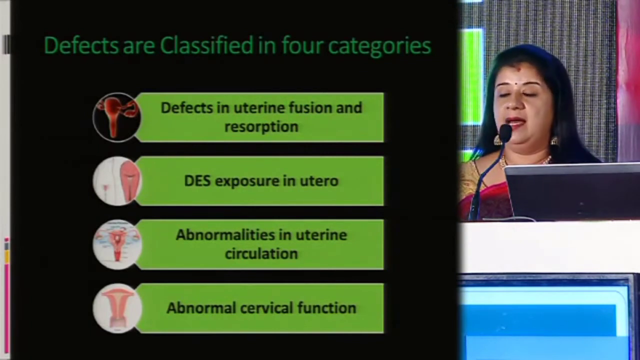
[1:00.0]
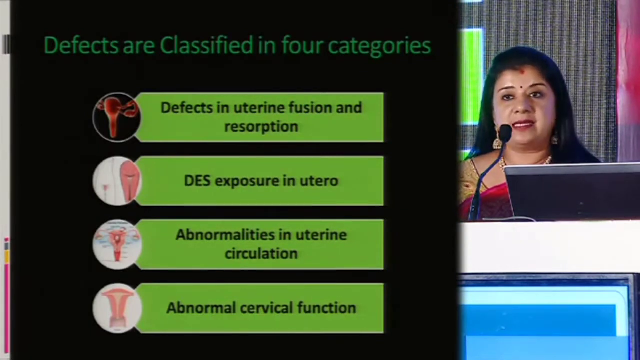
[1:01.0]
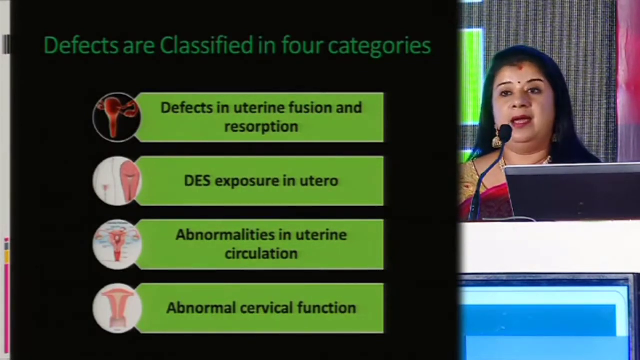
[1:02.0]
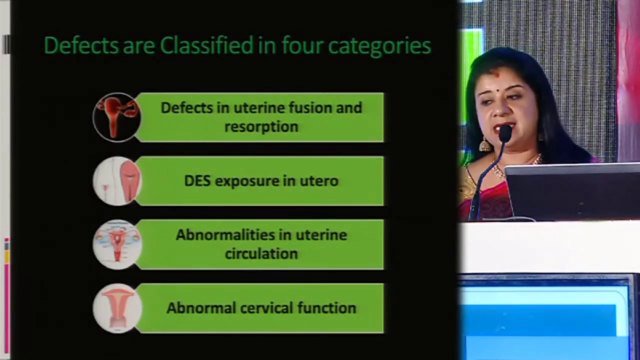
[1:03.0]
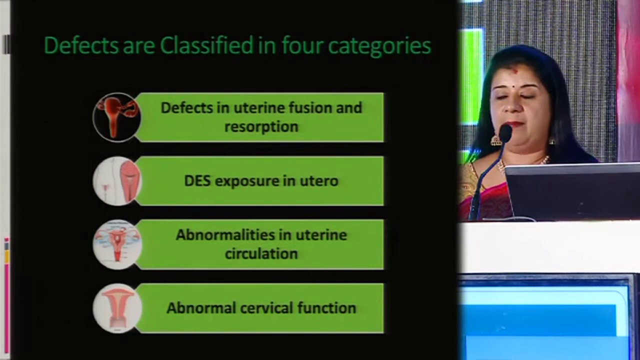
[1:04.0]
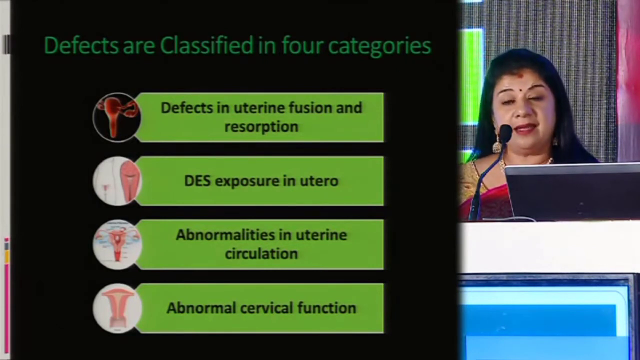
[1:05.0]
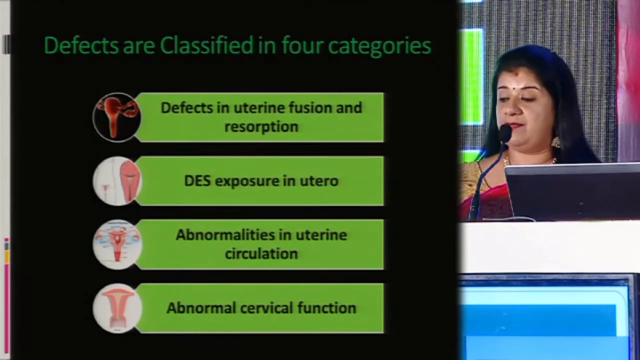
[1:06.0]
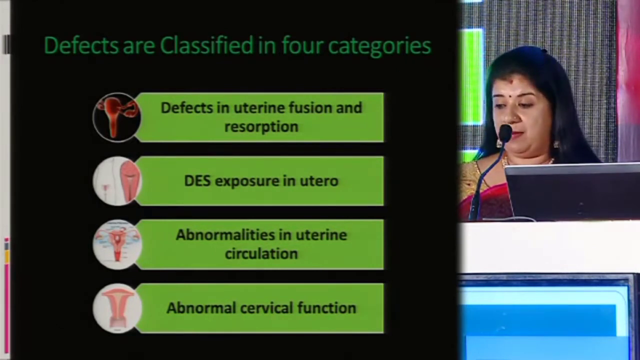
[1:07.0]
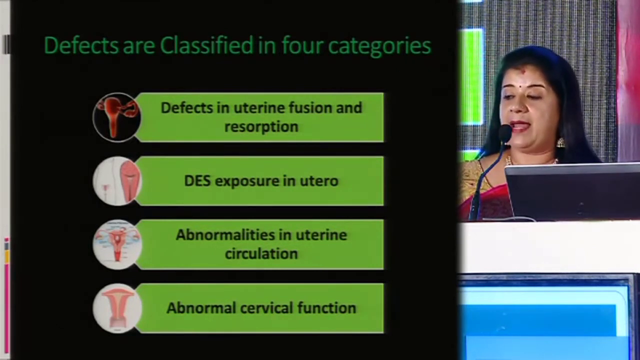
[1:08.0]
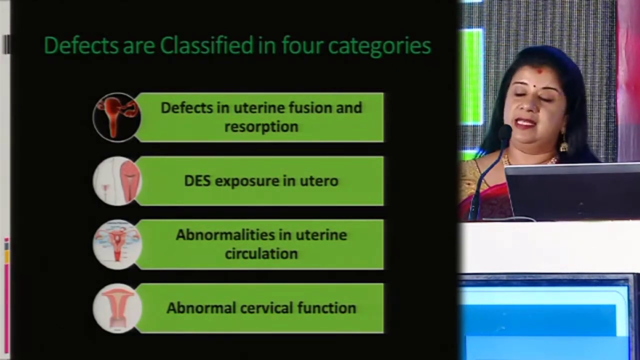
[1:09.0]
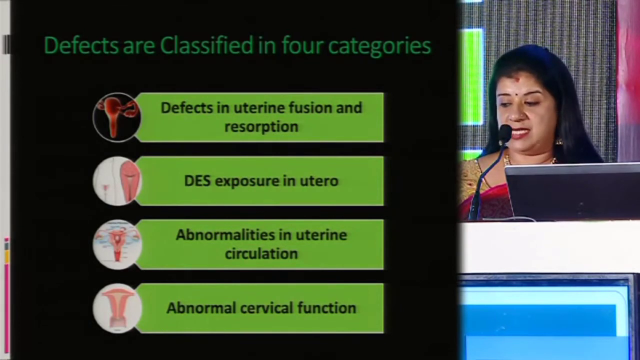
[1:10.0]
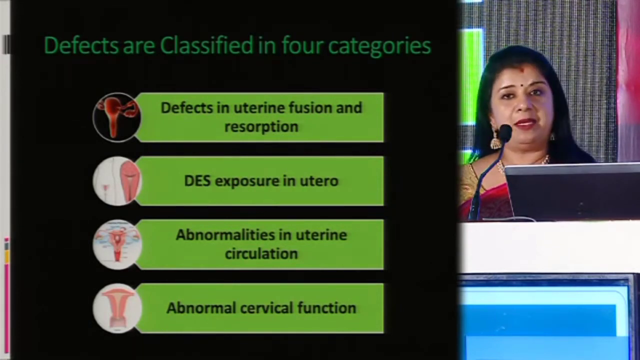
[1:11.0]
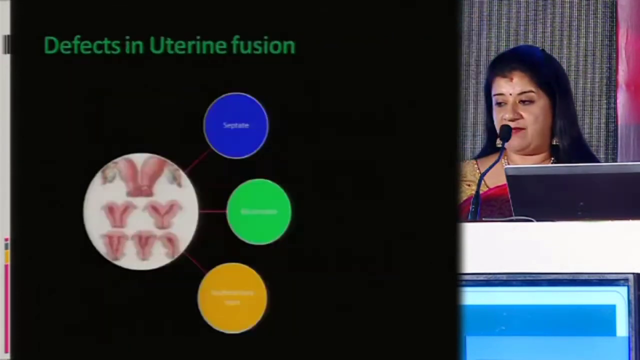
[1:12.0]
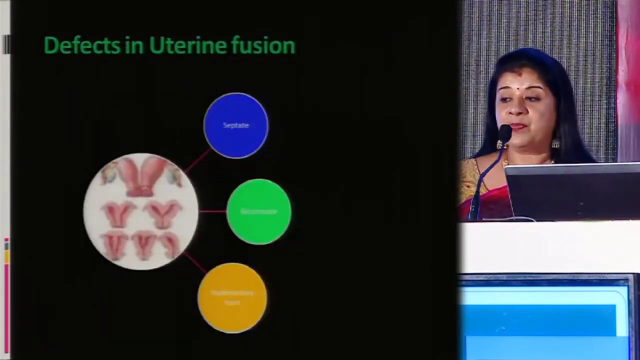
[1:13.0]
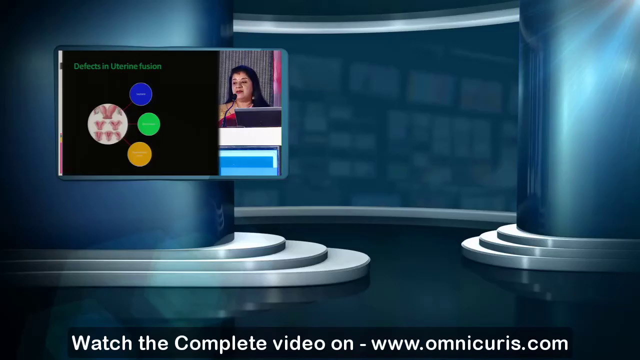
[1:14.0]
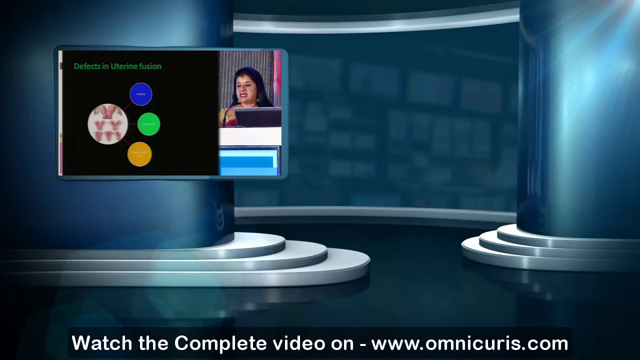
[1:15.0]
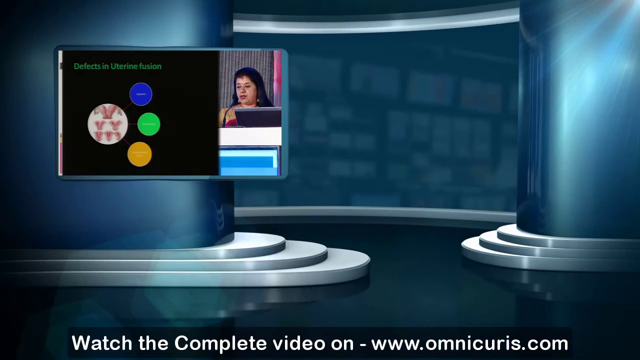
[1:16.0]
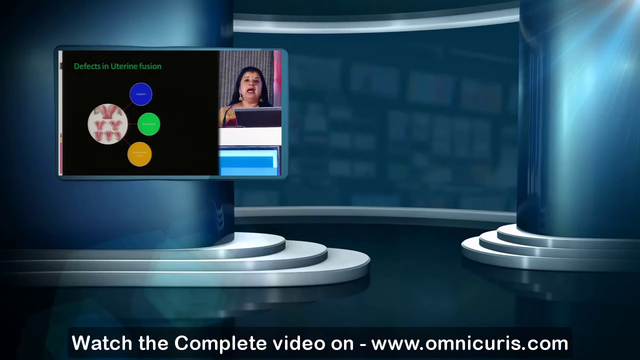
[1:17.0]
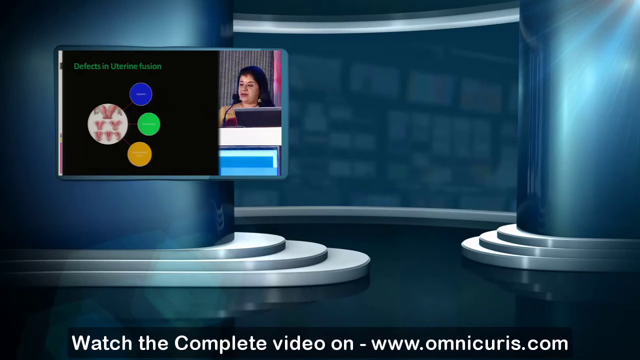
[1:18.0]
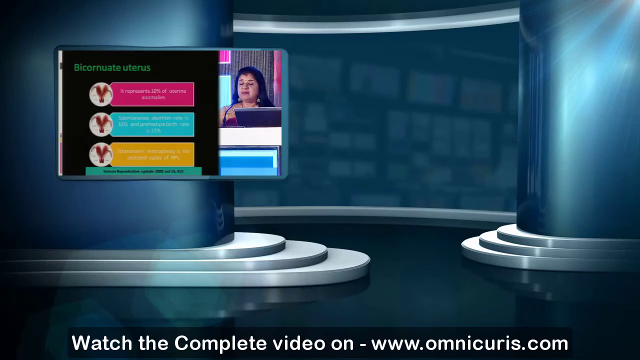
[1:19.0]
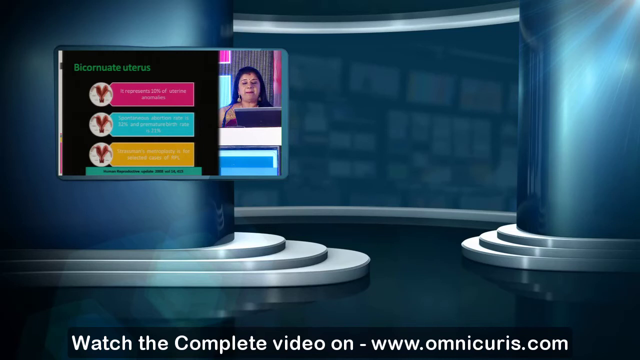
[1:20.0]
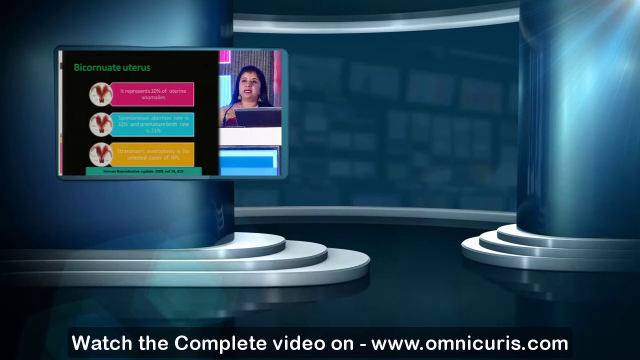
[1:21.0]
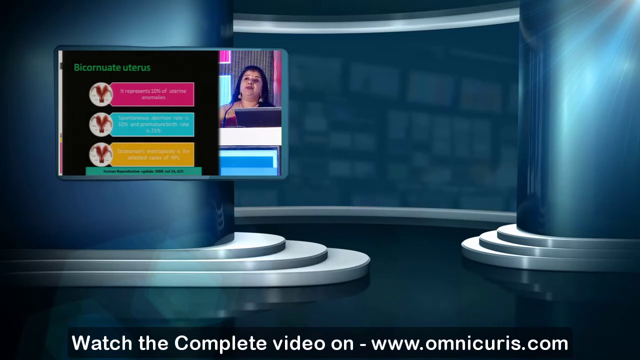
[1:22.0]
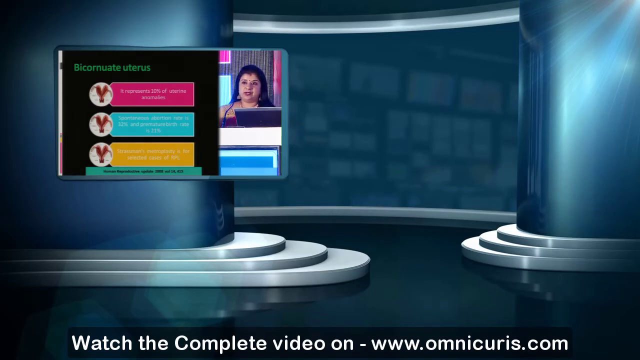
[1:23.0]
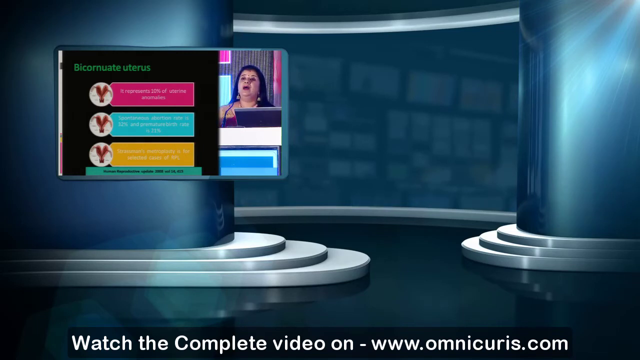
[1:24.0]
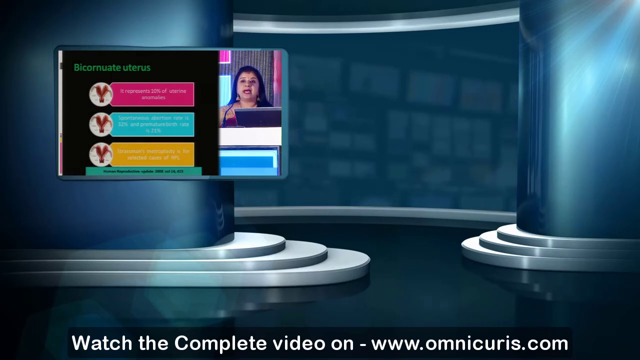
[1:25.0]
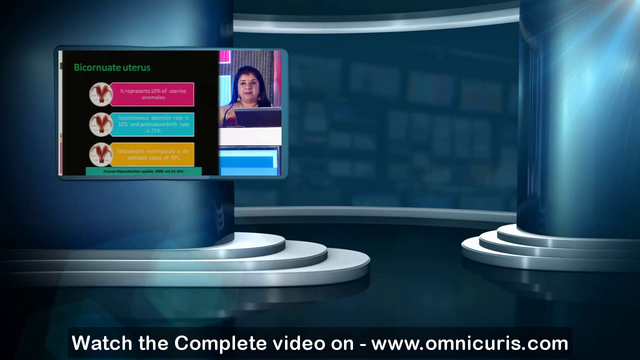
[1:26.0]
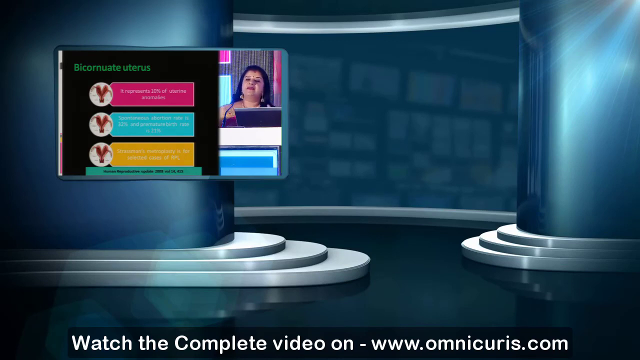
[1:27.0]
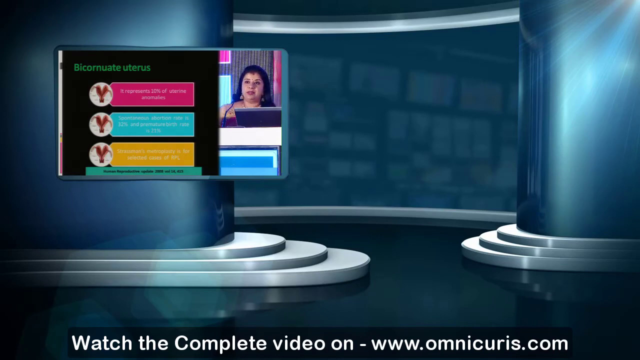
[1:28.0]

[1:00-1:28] A woman talks behind a microphone with a computer in front of her. To her left is a slide titled "defects are classified in four categories," with four categories listed below: "defects in uterine fusion and reabsorption," "DES exposure in utero," "abnormalities in uterine circulation," and "abnormal cervical function." Her mouth moves as she talks. The video then kind of zooms out, and she appears to be on a TV screen inside what looks like an AI-generated hall with big blue columns that are silver at the base. She is still talking on this TV screen, but the view is no longer zoomed in and the text on her slide can no longer be read.